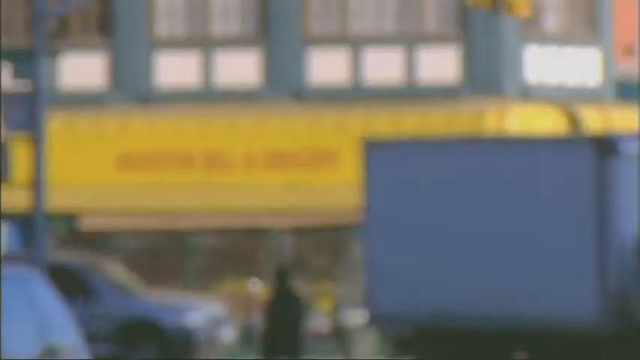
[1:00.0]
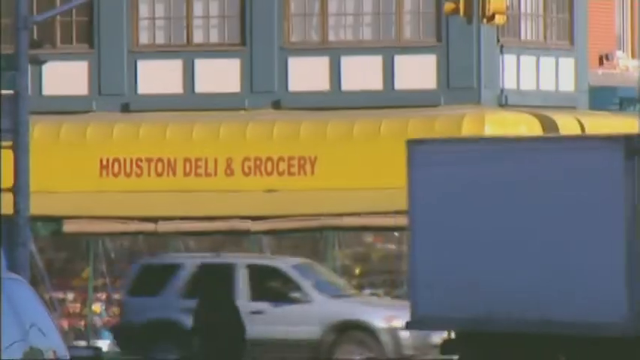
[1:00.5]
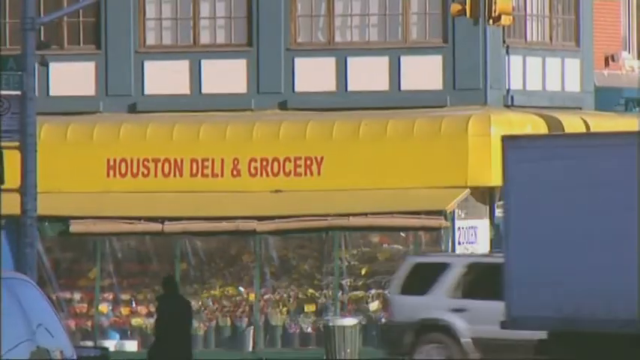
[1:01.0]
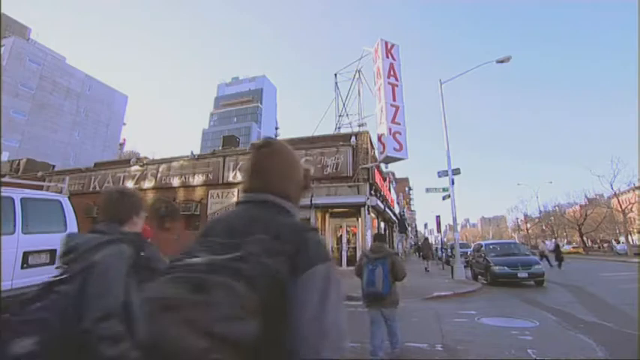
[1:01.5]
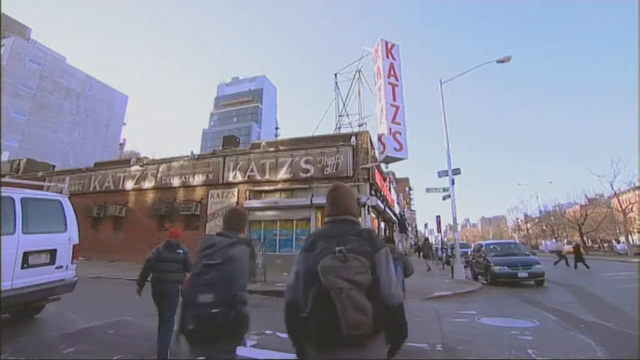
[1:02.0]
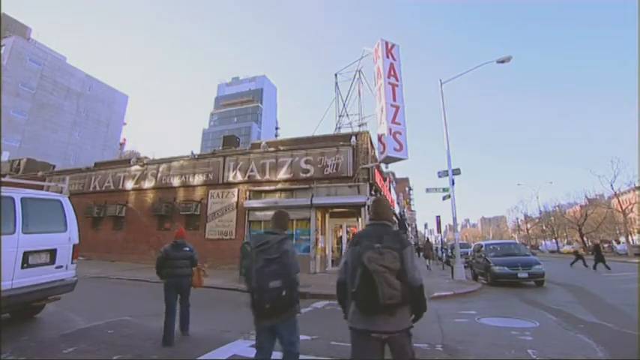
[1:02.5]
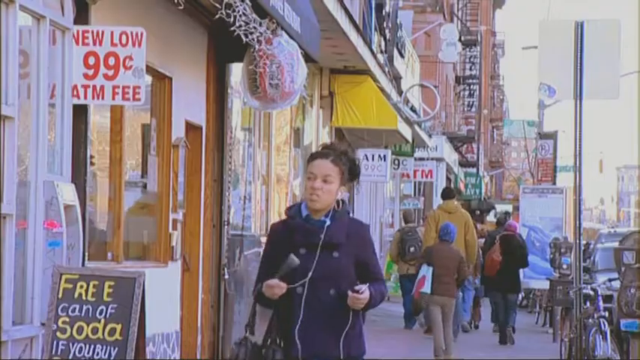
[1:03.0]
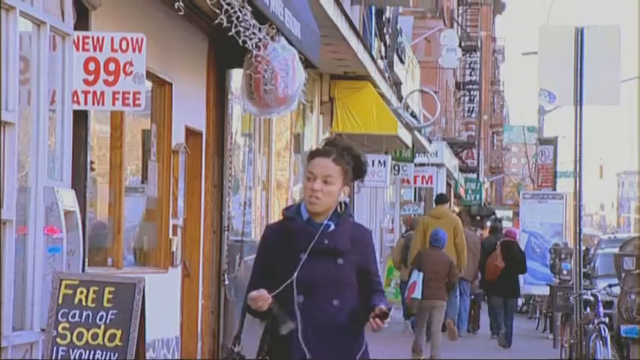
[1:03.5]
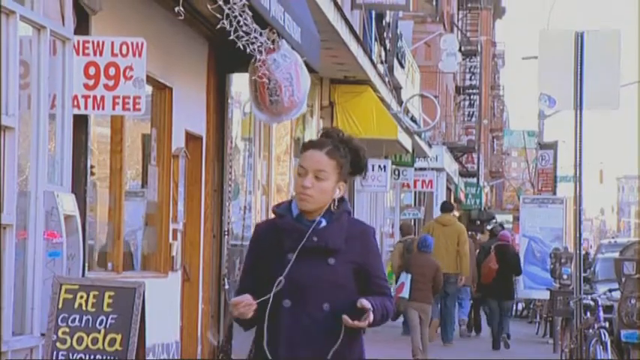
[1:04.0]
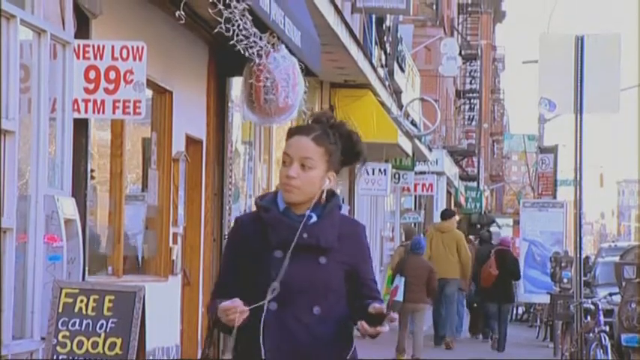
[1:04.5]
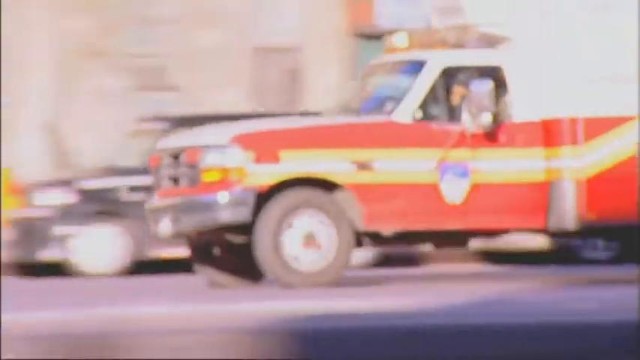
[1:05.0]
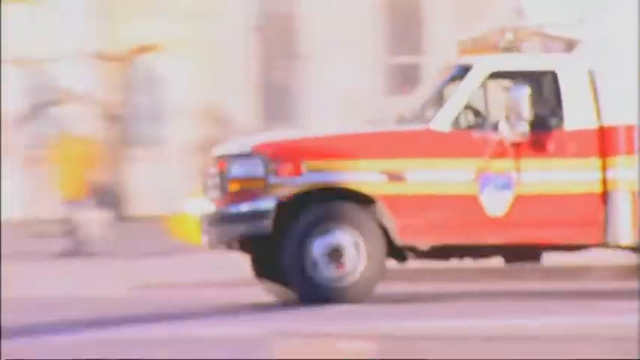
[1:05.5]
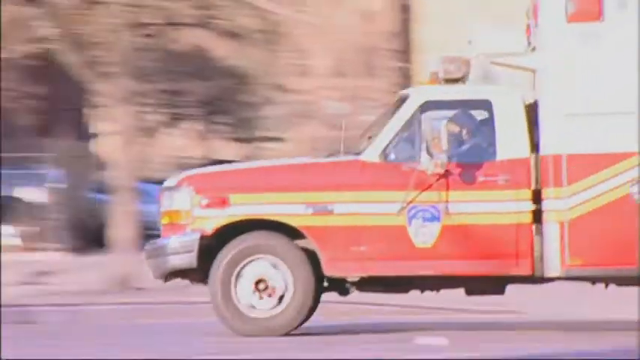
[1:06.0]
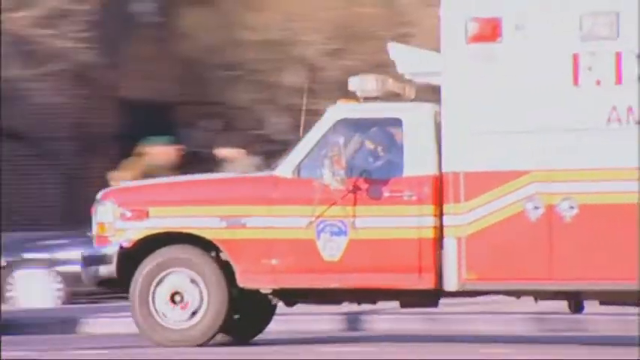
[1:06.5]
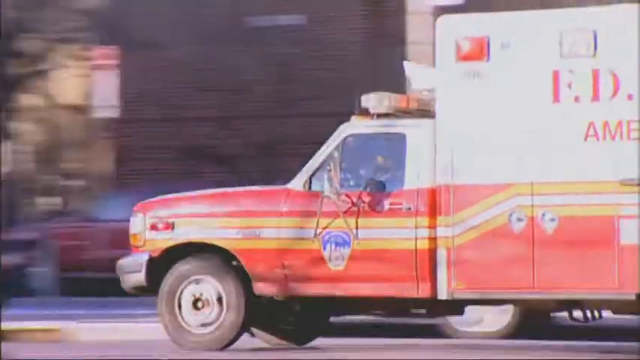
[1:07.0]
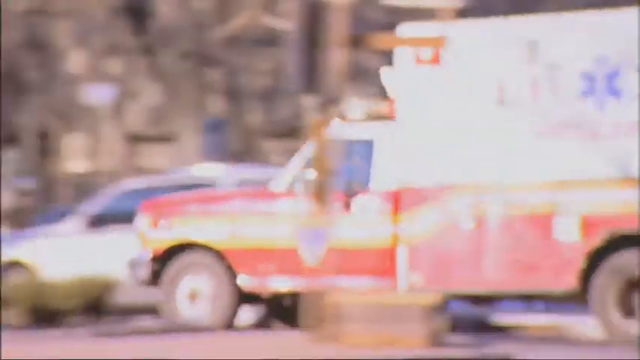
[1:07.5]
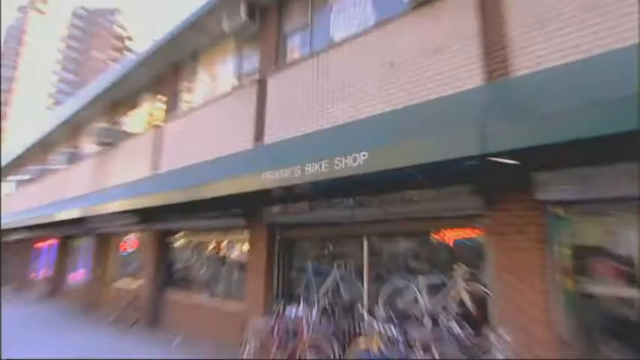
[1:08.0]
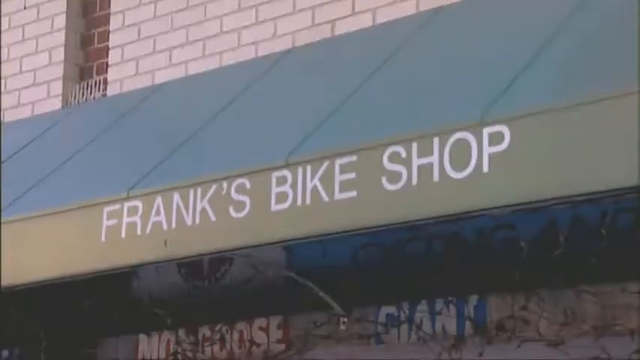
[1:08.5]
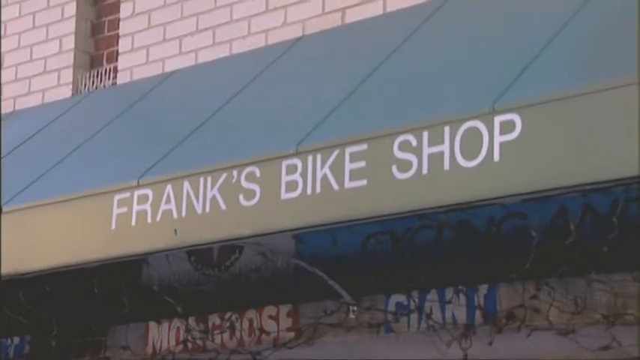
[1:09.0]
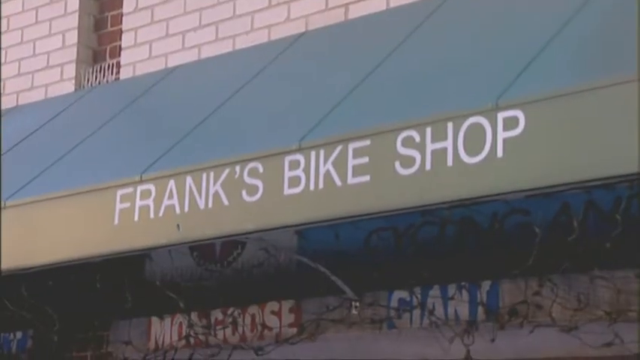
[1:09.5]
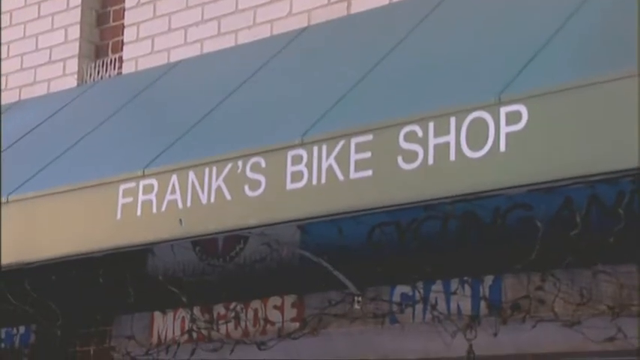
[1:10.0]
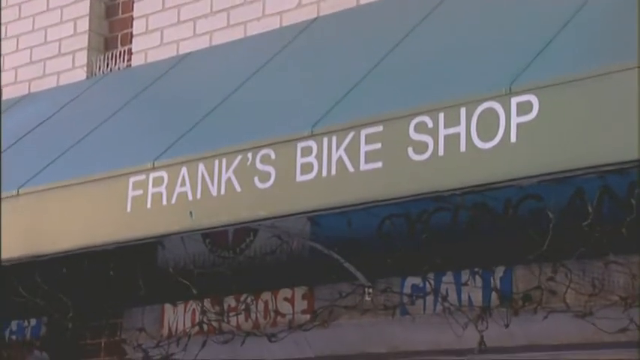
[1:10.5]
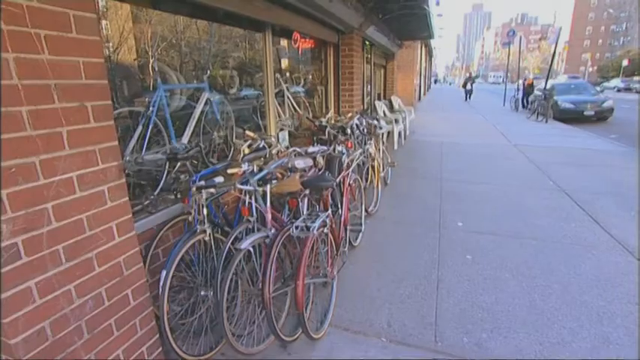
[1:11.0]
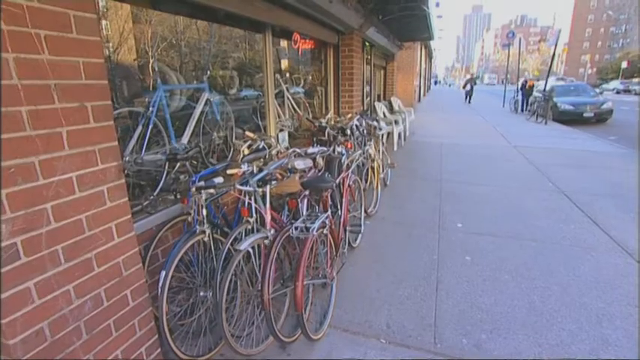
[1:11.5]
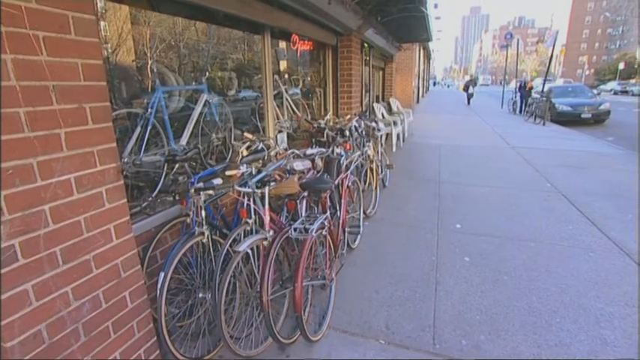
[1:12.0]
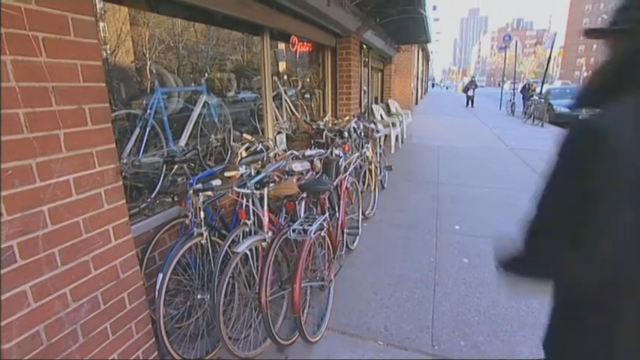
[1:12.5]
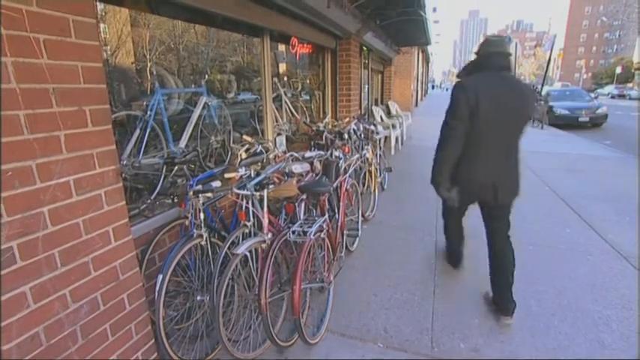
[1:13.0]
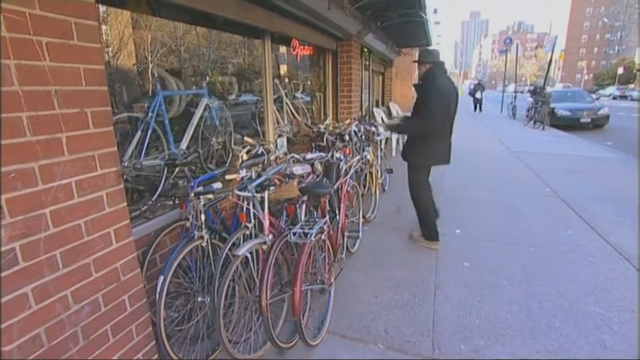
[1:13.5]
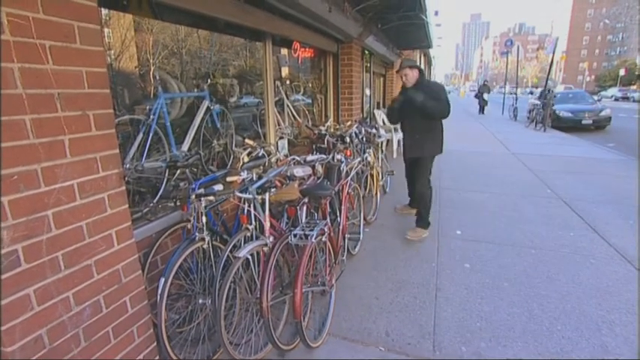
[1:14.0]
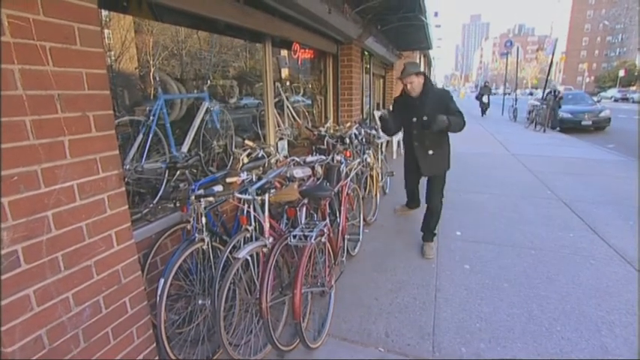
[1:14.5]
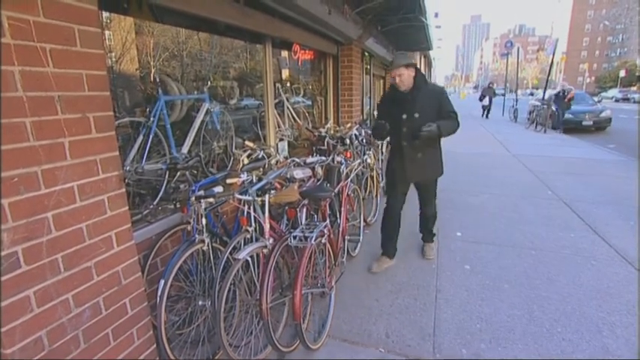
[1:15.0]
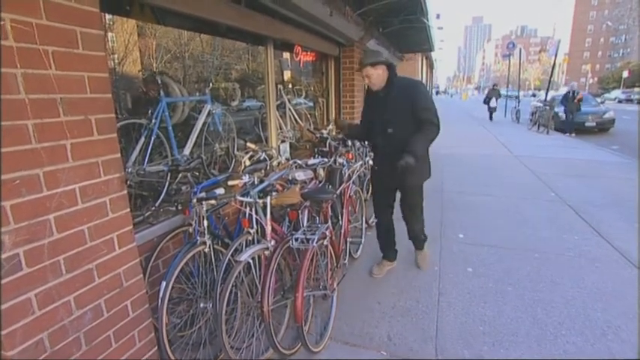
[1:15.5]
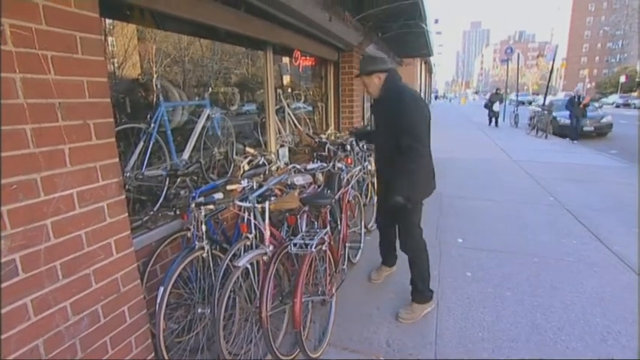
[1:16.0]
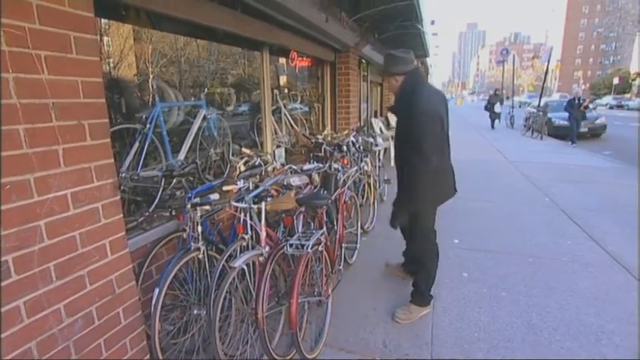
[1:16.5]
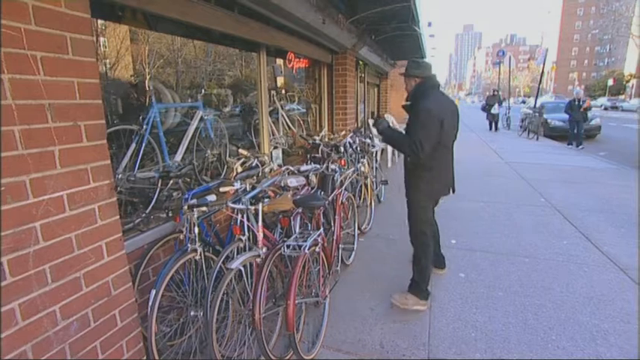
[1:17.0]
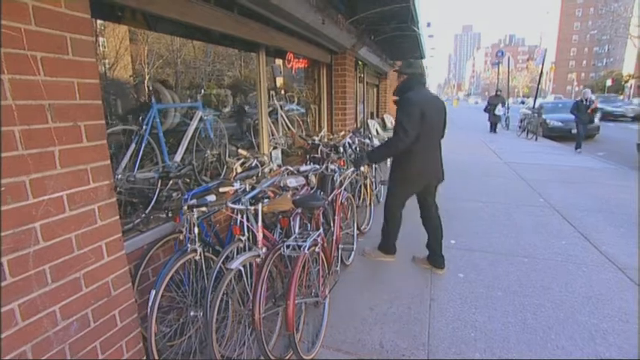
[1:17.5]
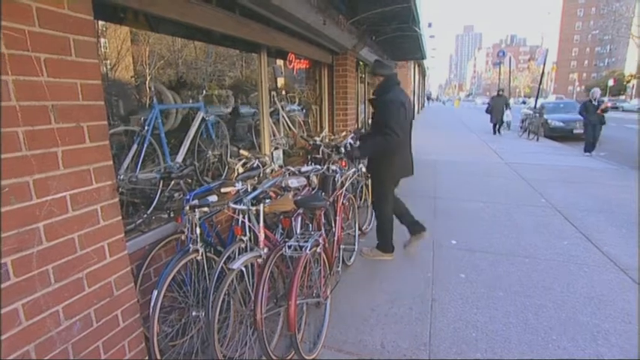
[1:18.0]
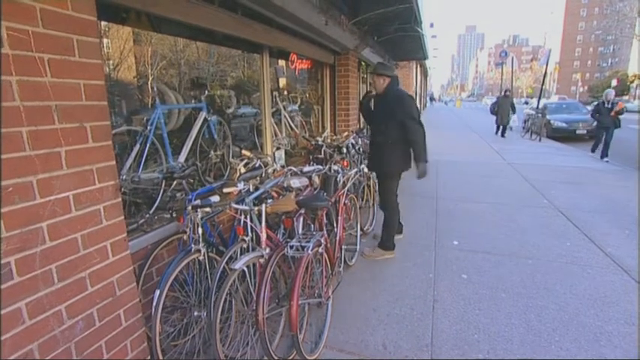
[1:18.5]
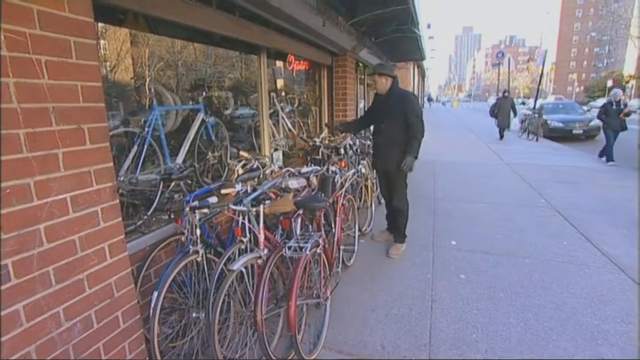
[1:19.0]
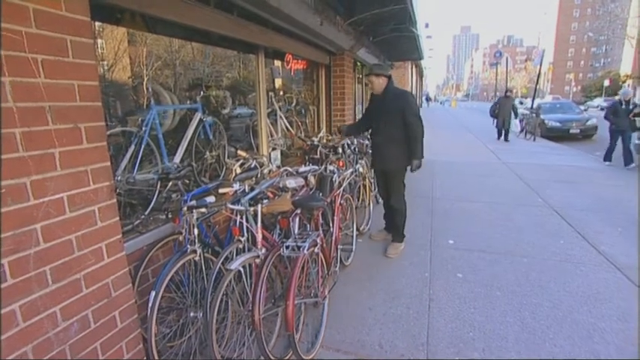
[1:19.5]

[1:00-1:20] In a part of downtown New York, Katz's Deli is visible and people walk along the street in the daytime. An ambulance goes by. The scene arrives at Frank's Bike Shop, which has a rack of bikes in front of the store, five deep. The man runs up and starts pointing in all directions. A red sign in the window appears to say the shop is open. It is wintertime, and other people walk by wearing heavy jackets.